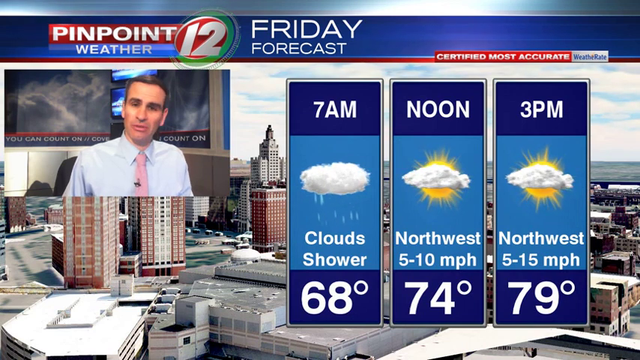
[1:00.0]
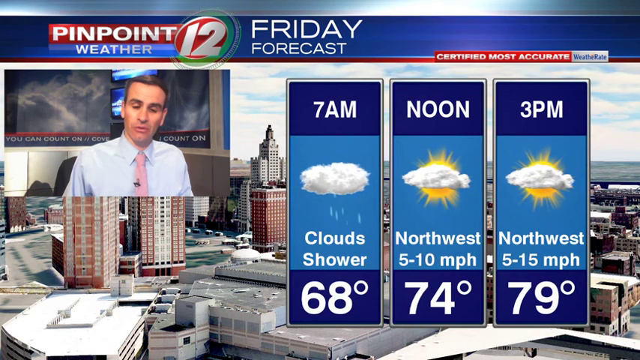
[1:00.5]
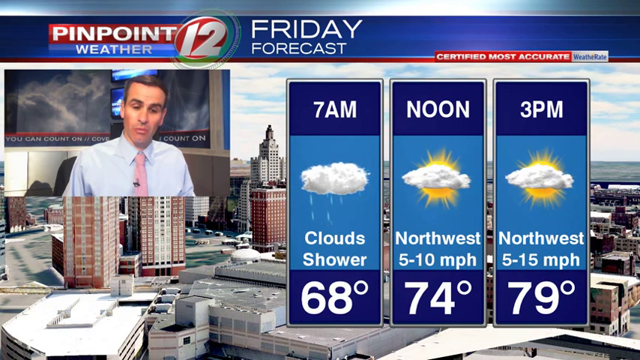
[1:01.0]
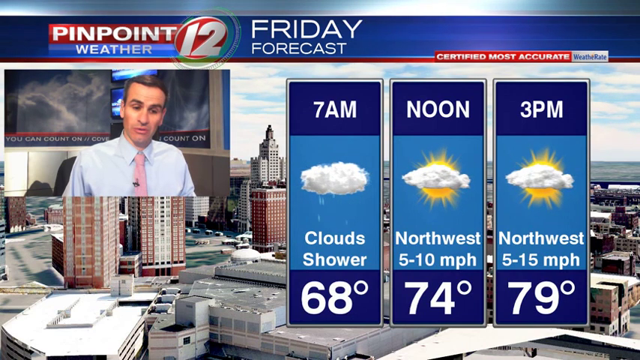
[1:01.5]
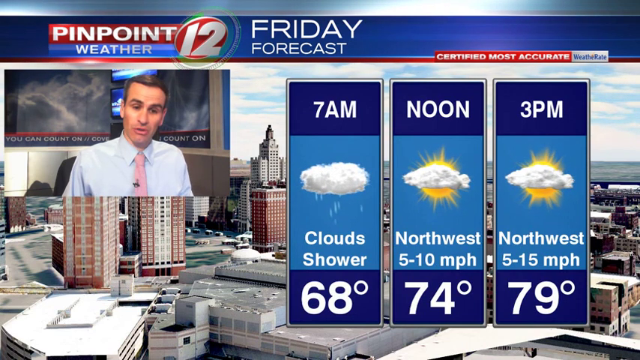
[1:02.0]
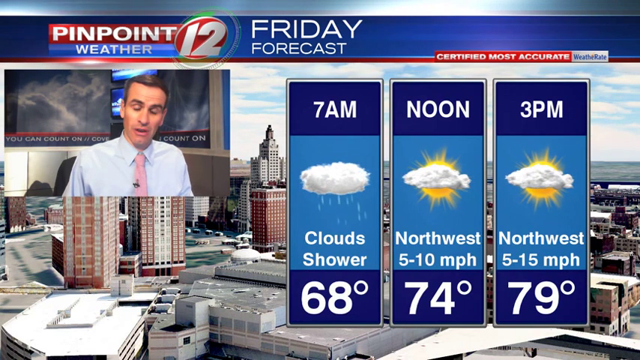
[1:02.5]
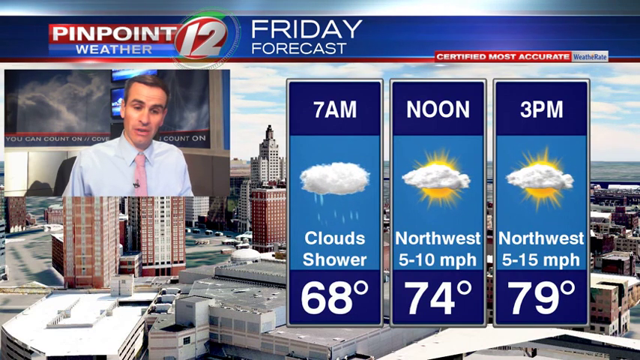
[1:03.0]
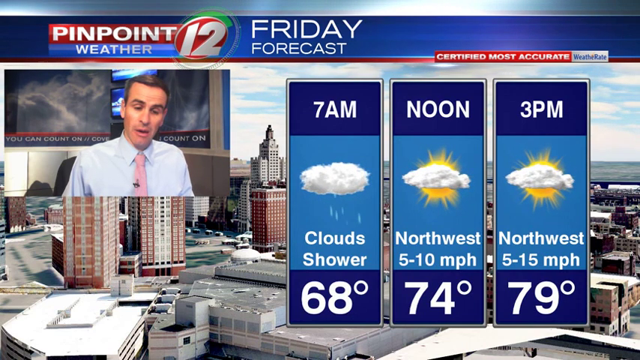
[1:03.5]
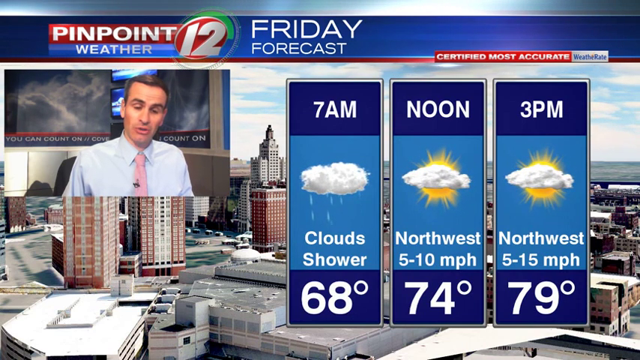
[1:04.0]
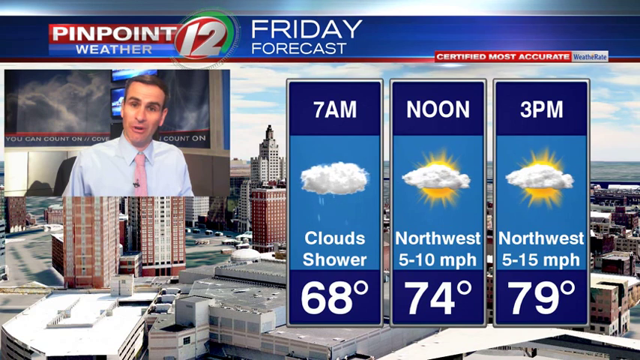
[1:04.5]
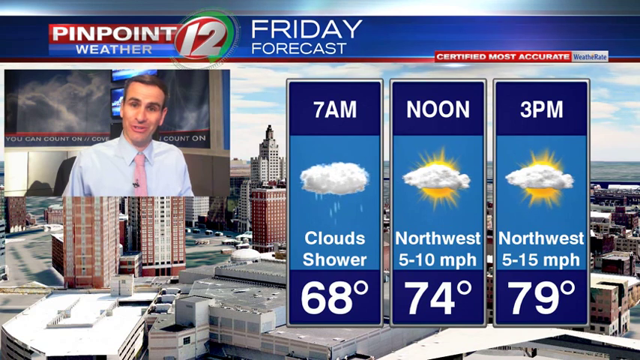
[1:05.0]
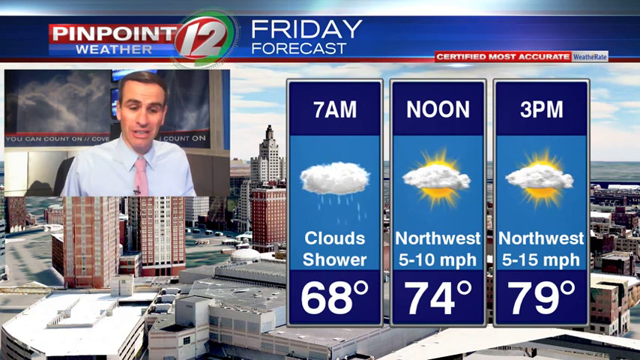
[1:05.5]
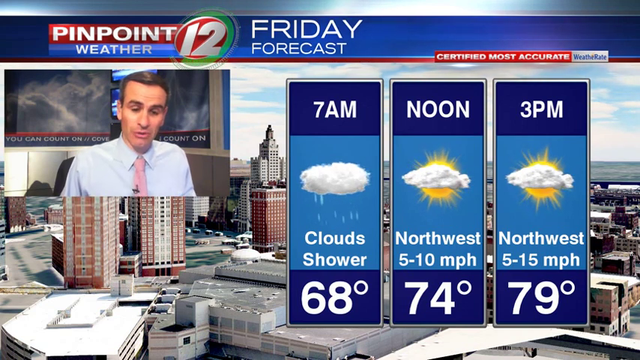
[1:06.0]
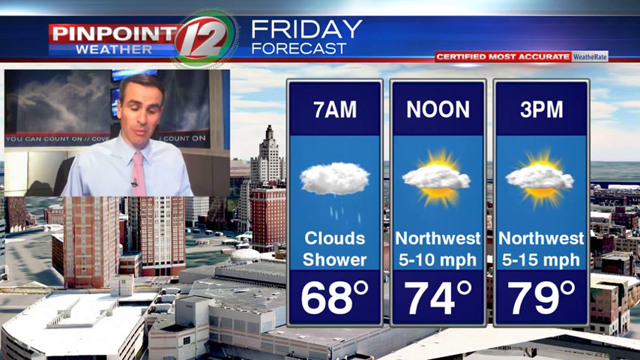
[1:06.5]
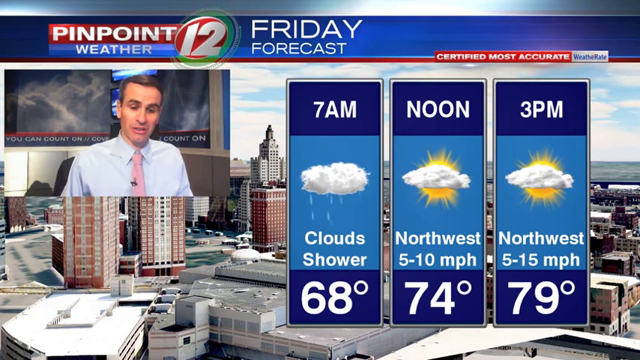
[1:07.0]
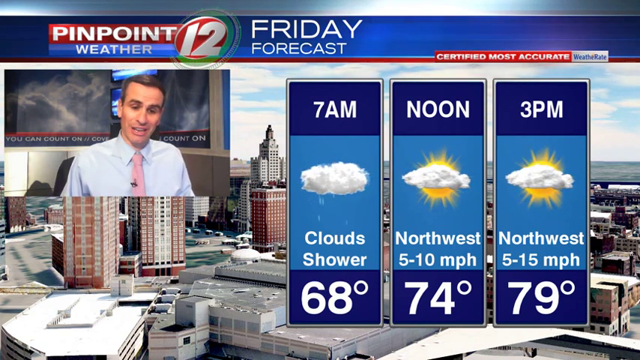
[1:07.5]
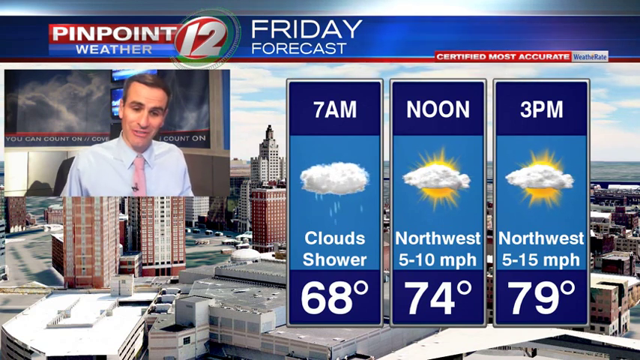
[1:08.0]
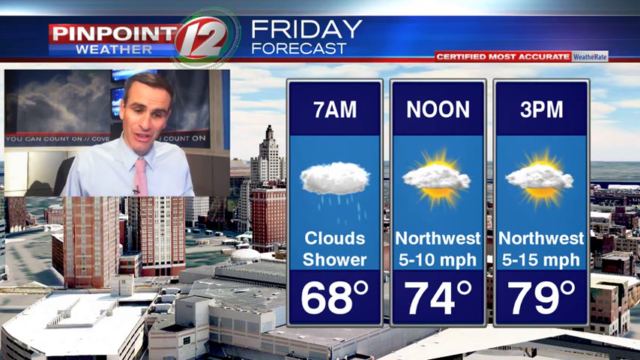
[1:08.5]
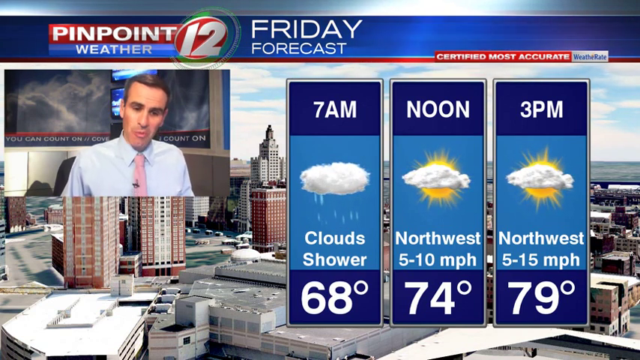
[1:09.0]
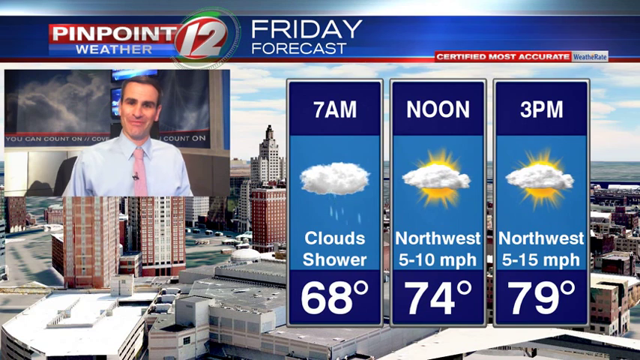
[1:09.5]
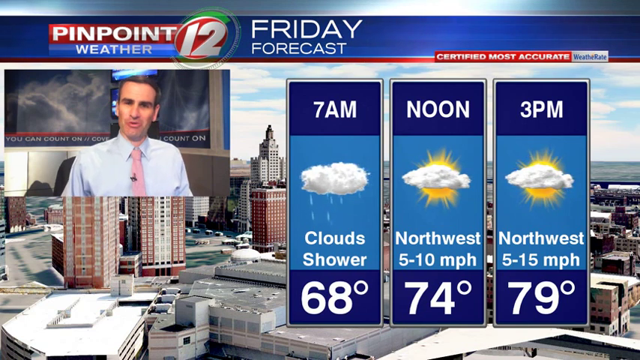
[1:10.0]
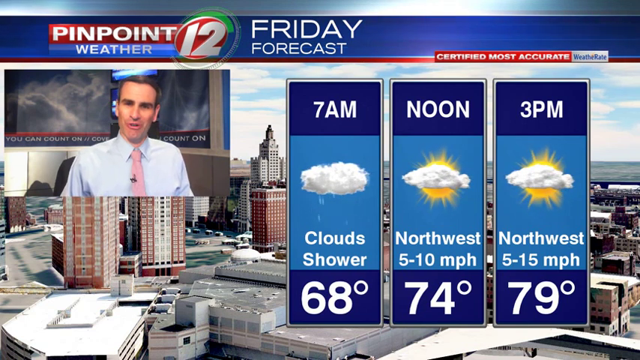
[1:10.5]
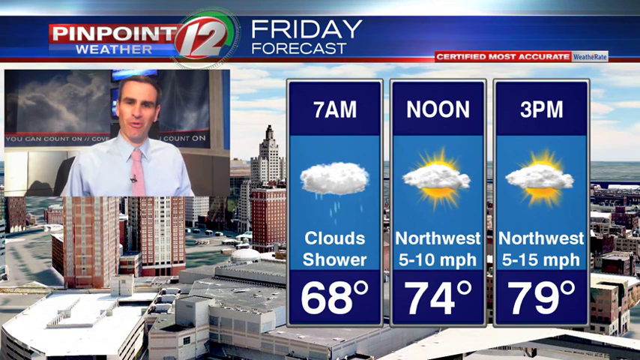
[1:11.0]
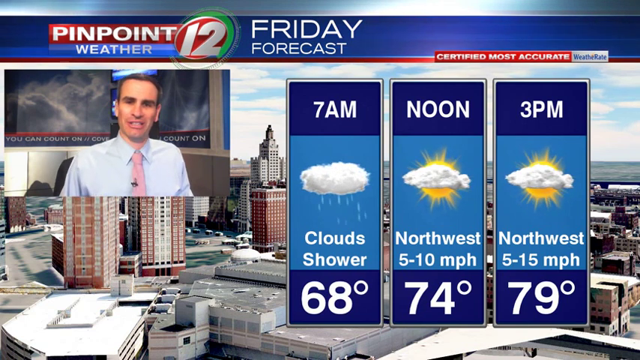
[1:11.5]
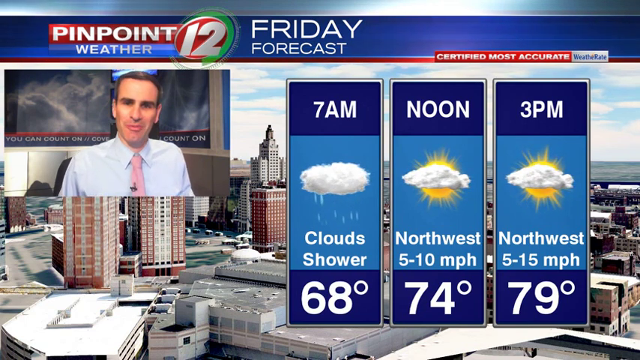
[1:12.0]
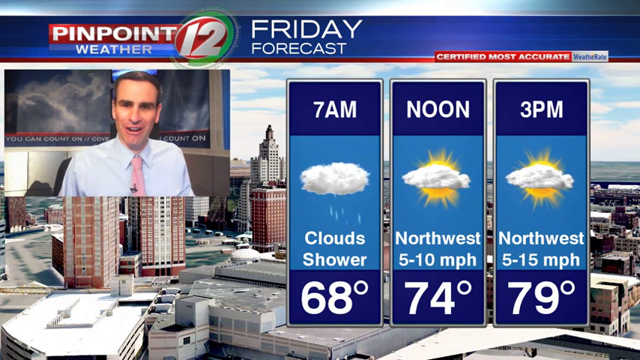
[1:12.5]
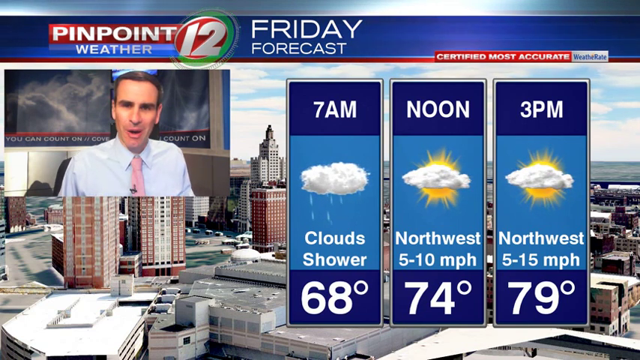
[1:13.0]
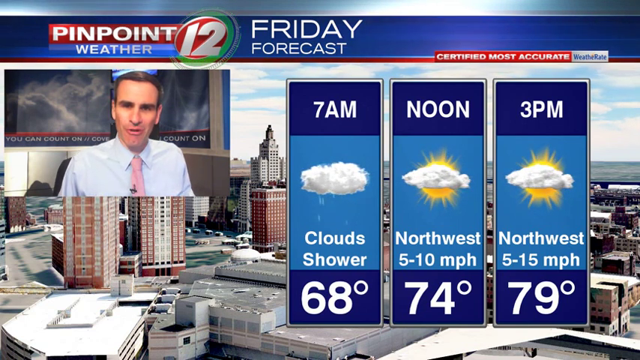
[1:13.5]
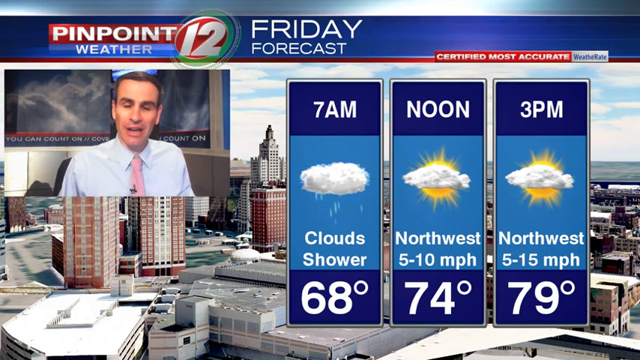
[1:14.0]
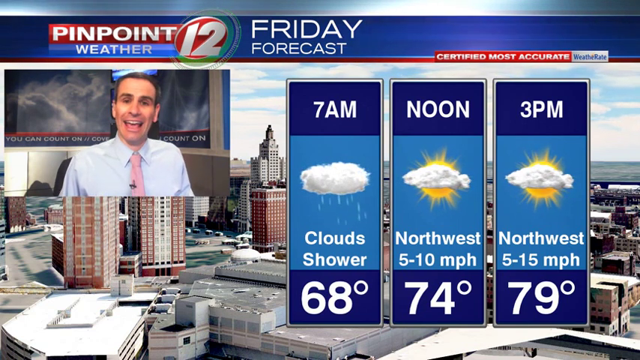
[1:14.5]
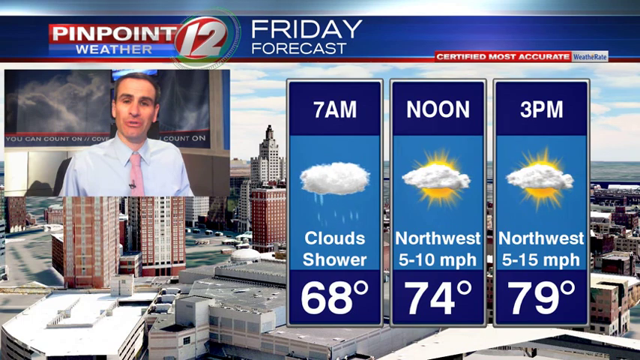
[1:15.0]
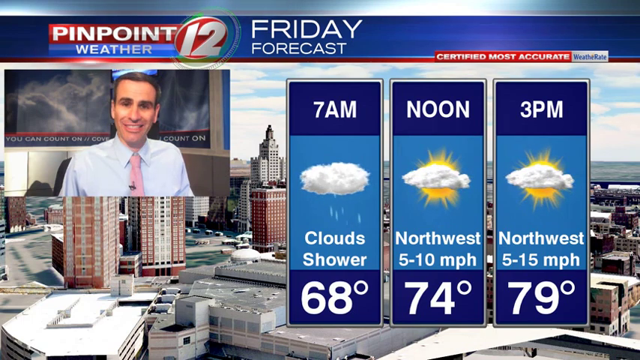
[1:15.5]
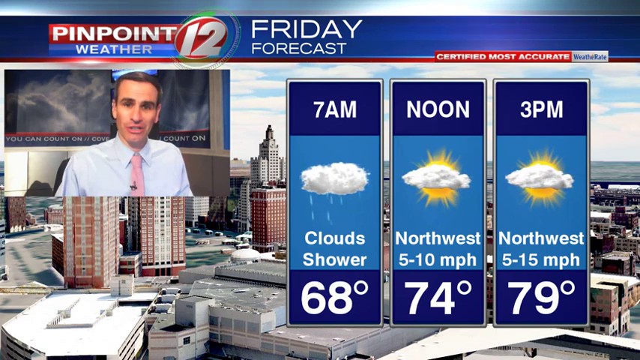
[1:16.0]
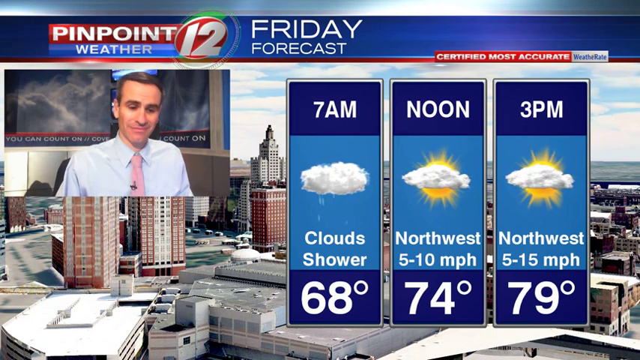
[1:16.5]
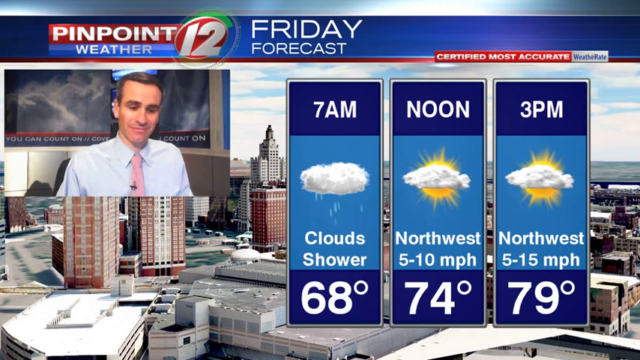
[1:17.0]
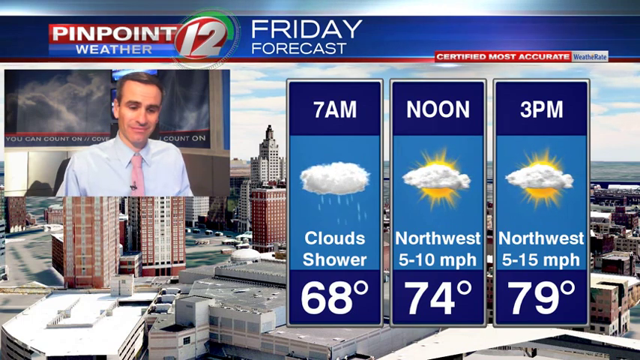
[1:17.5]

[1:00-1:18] An image of a city with many buildings fills the background; it appears to be taken from the sky, since the roofs of the buildings are visible. On the left side of the screen, a man who appears to be sitting in a chair wears a light-colored button-down shirt and a pink tie. He seems to be speaking directly to the camera, though his eyes occasionally move down toward his left and back to the camera. In front of the city image are three separate vertical rectangles showing the forecast for 7 a.m., noon and 3 p.m. The images inside the rectangles illustrate the weather and are animated: the one with a cloud has raindrops falling from it, and in the ones with the sun peeking from behind clouds, the sun's rays appear to be moving. The man appears to have a bit of a smile on his face as he speaks.